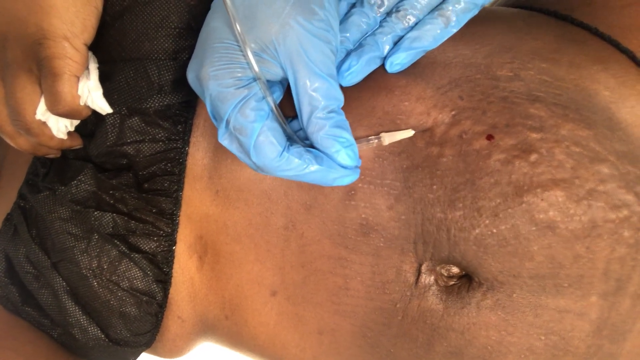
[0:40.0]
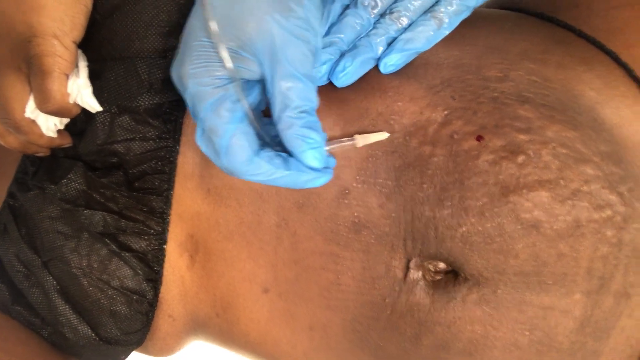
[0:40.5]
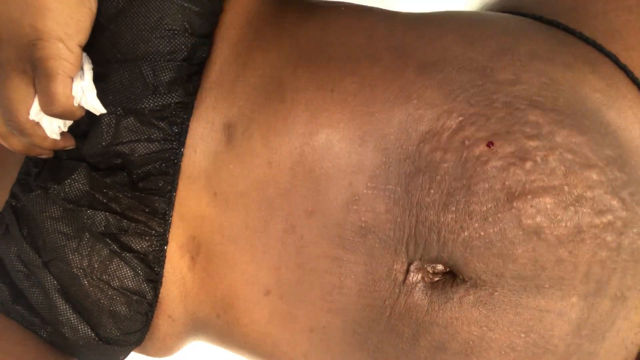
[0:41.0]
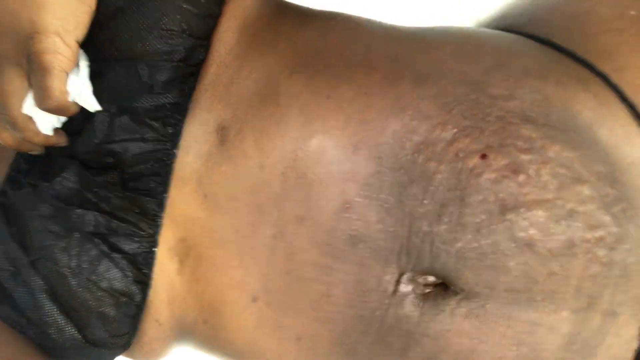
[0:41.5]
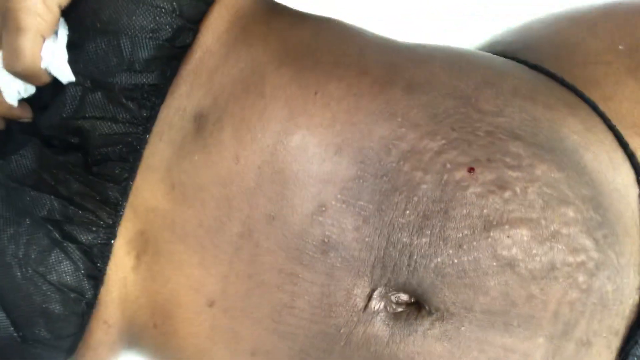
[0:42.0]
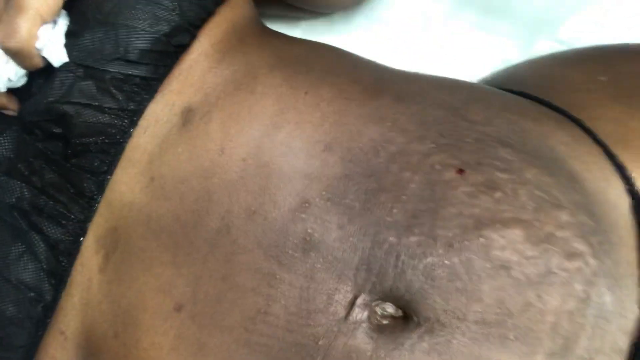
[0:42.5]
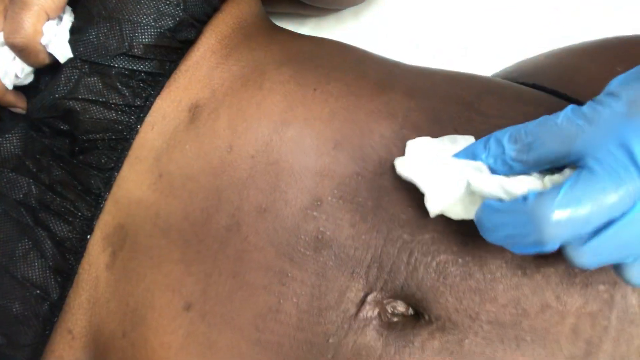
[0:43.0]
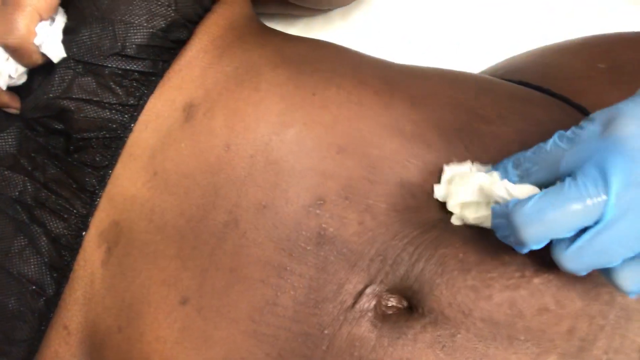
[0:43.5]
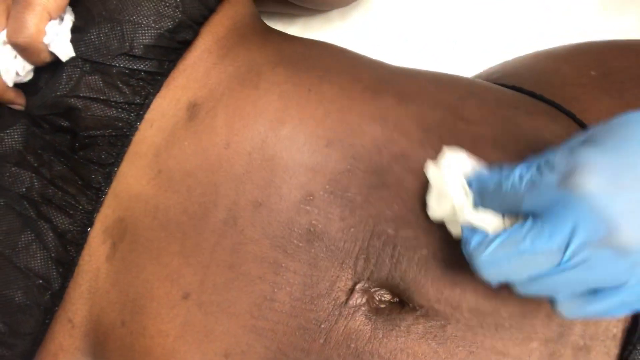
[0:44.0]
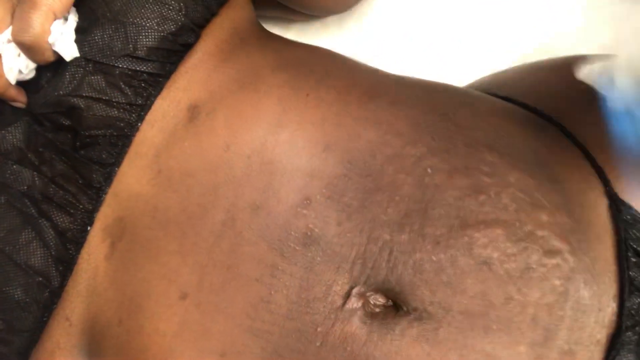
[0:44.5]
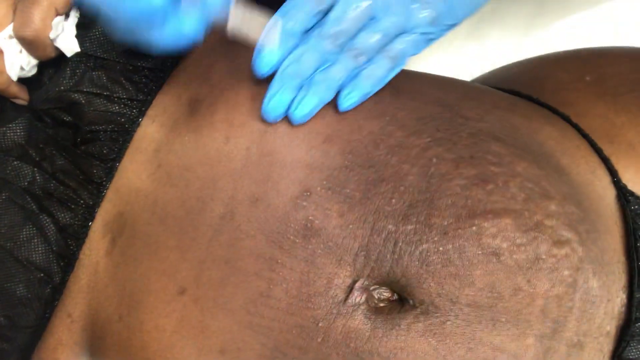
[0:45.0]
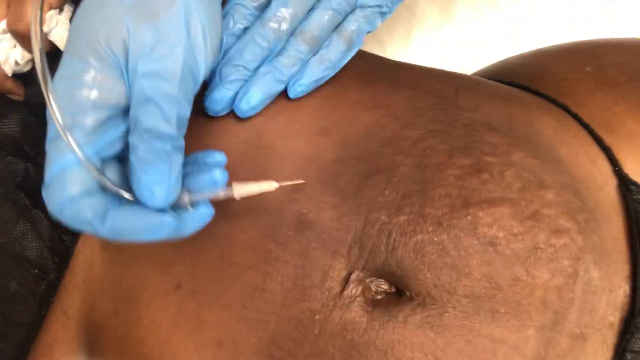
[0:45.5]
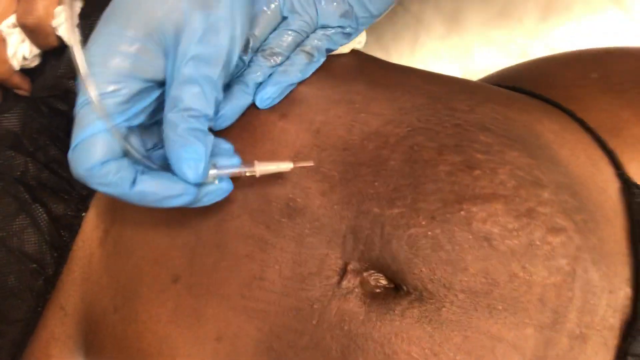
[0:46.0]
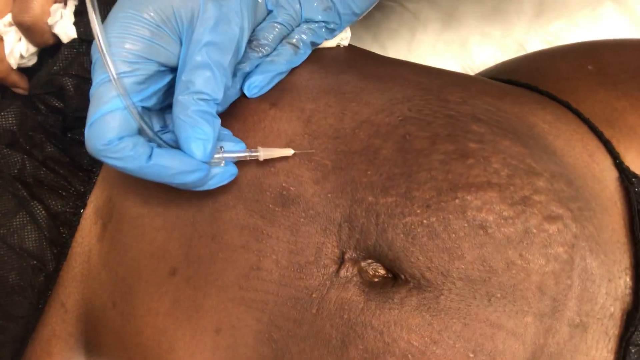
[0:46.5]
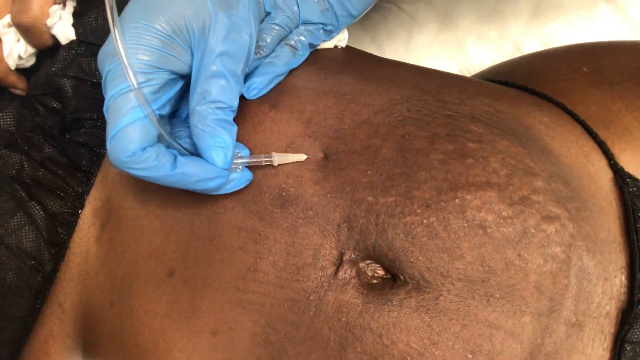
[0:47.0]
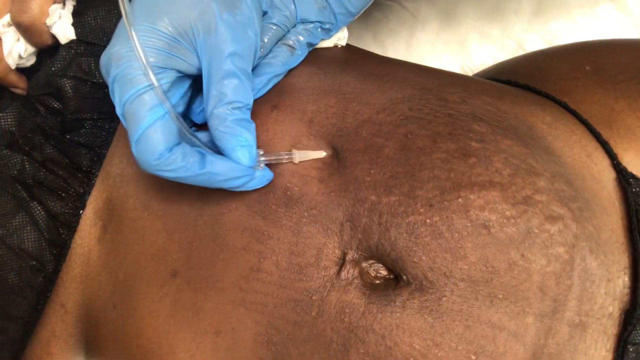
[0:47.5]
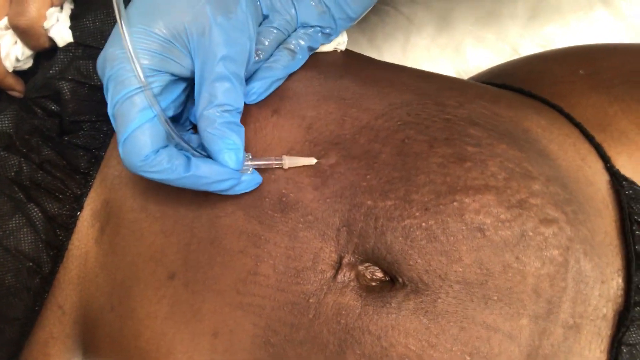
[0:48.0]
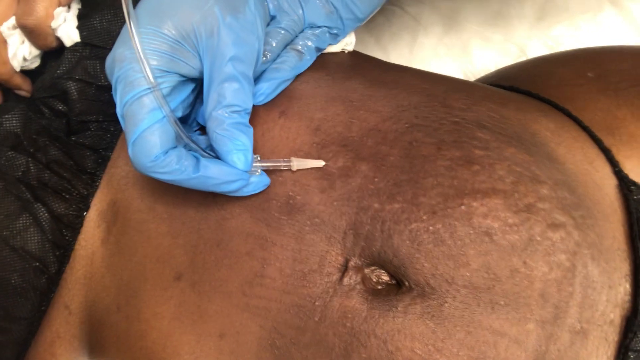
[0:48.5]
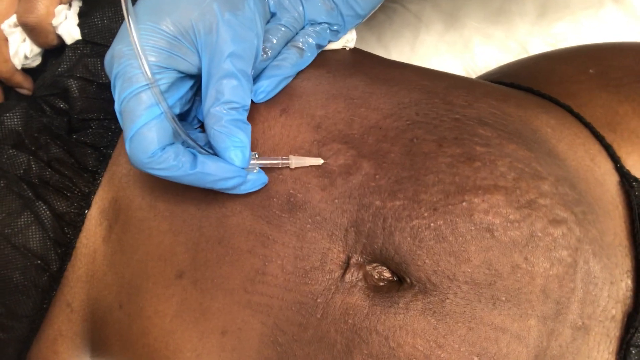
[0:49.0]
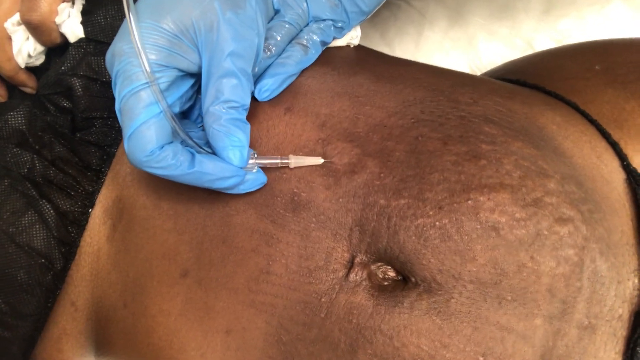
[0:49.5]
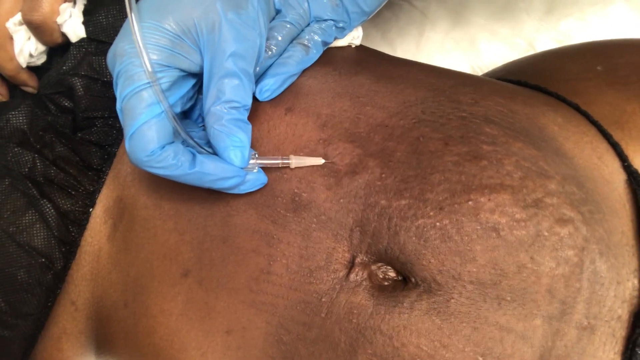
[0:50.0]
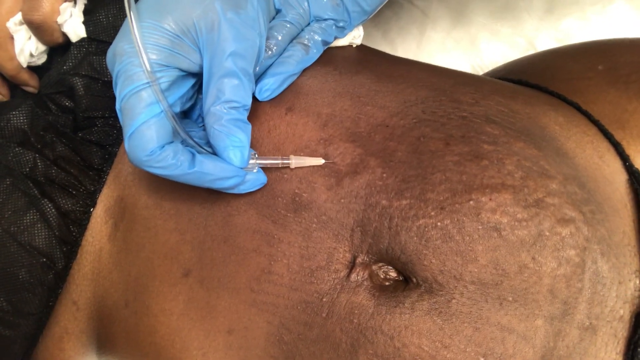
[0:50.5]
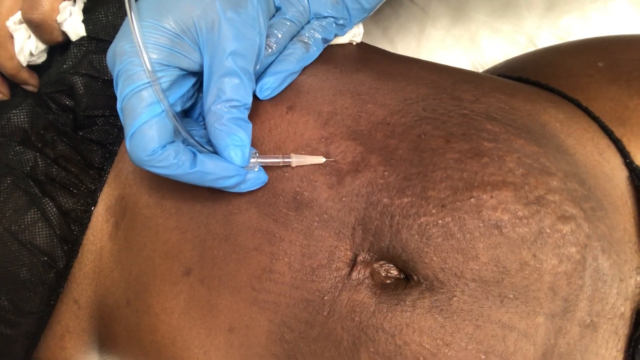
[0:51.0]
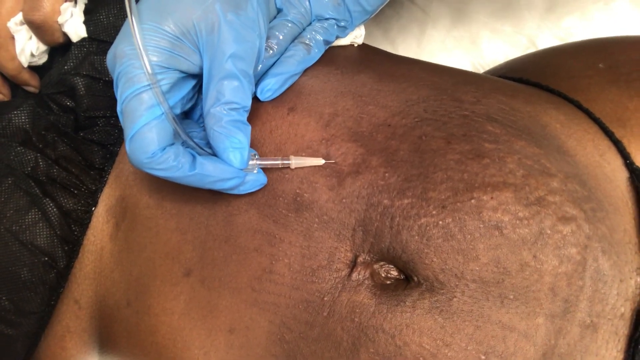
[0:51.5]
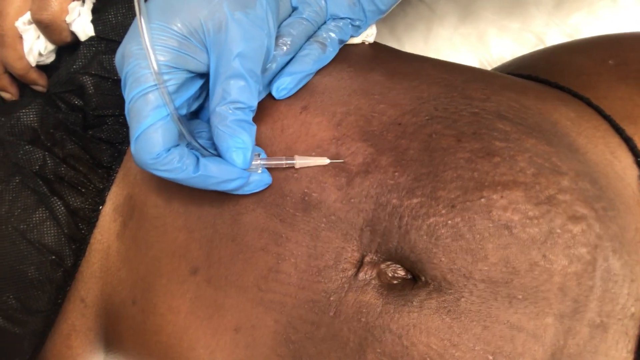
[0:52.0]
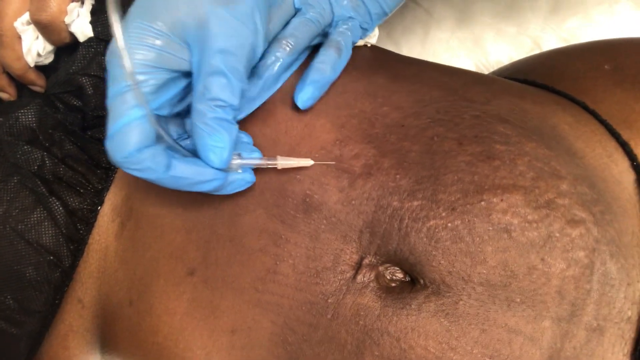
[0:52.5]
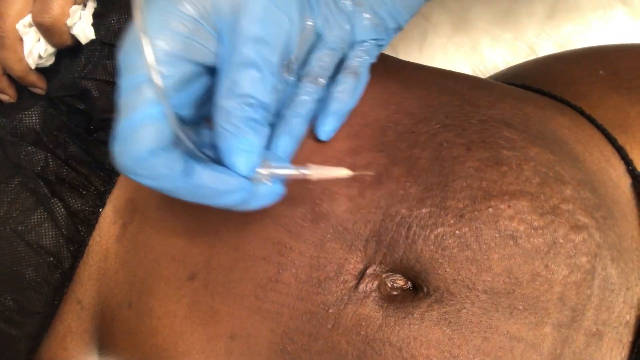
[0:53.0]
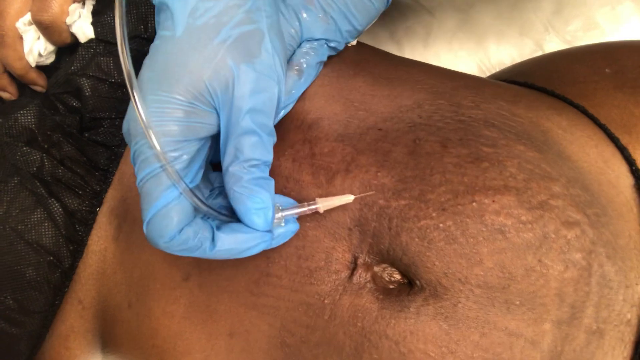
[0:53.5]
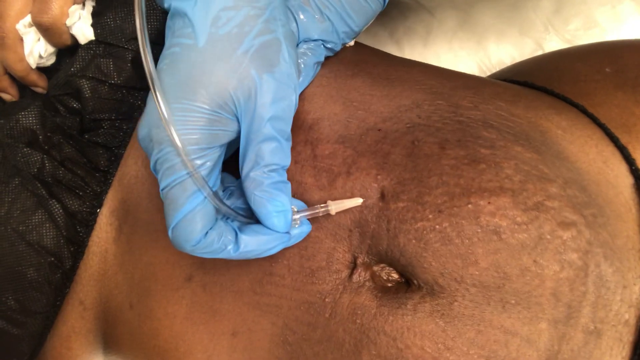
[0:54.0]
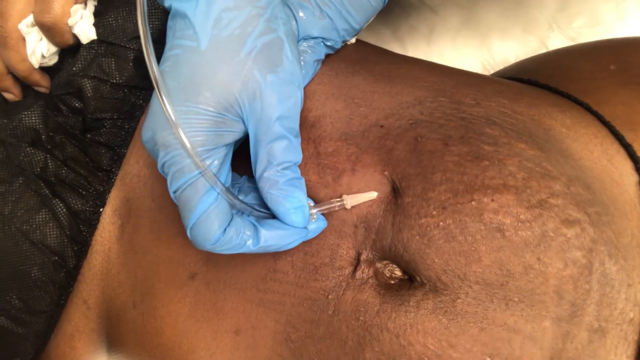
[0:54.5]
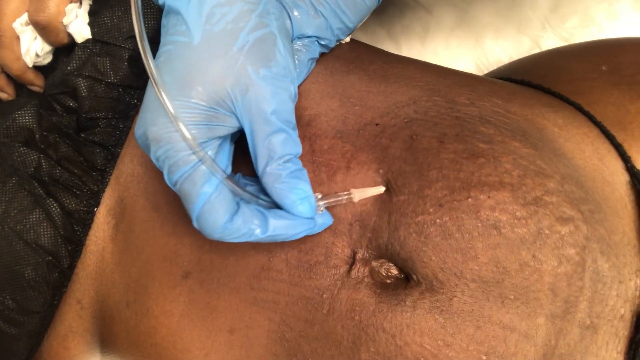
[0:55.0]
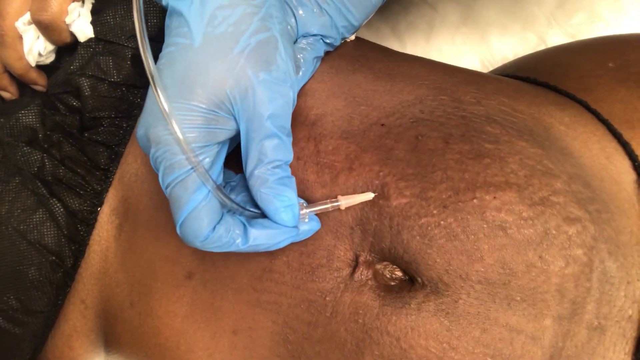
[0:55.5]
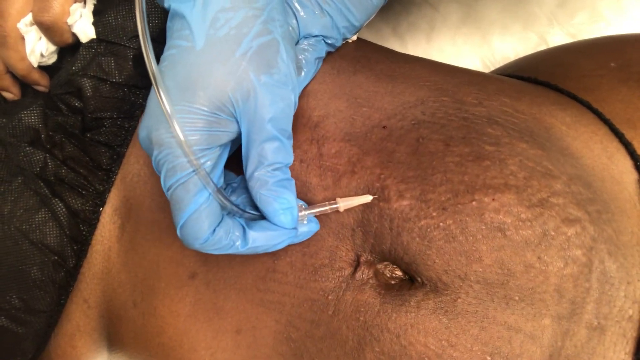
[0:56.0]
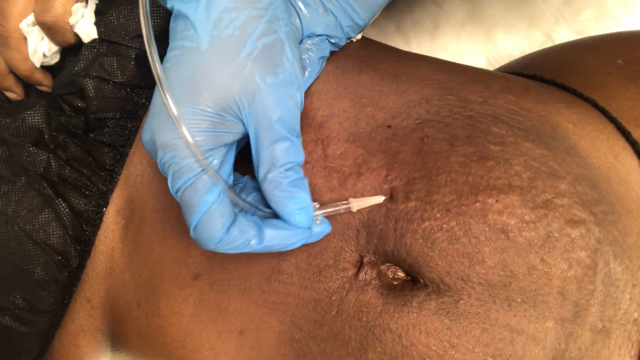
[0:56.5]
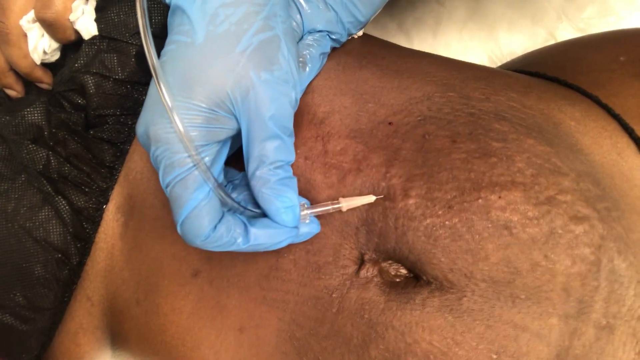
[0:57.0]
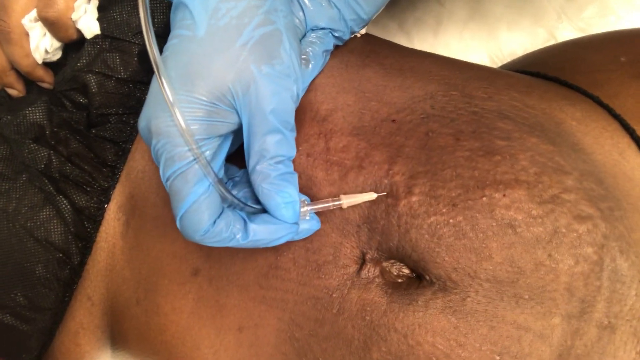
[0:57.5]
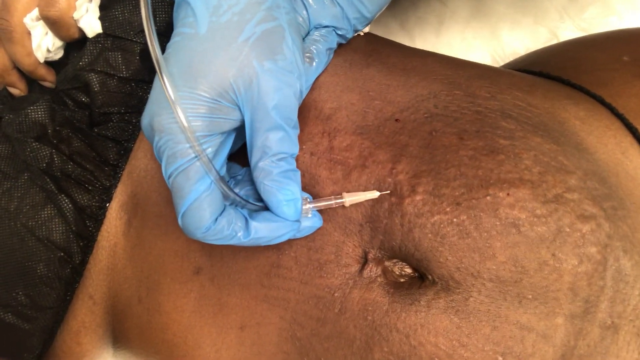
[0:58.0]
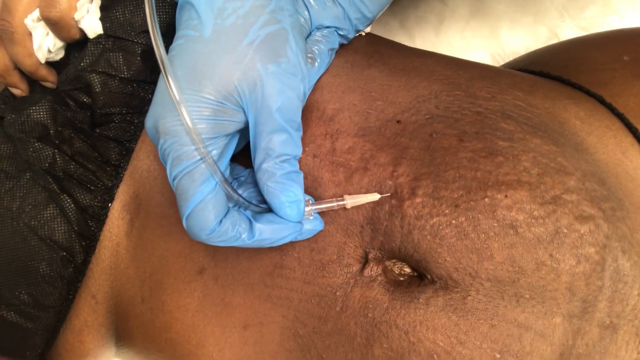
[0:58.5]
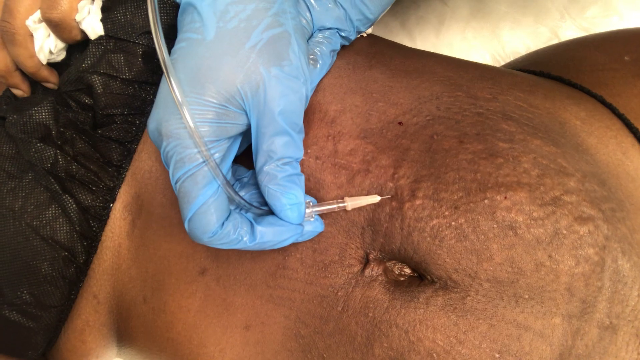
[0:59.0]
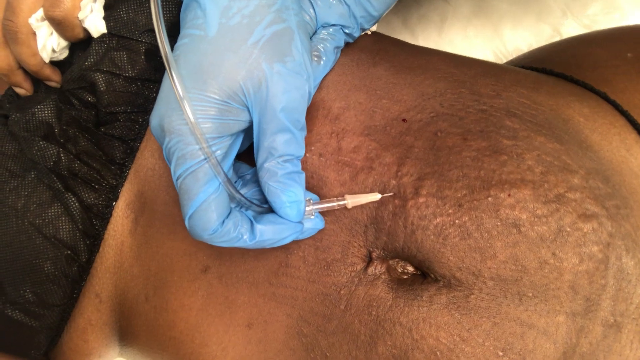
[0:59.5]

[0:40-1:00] The doctor, wearing blue latex gloves, holds down the patient's stomach with one hand and with the other holds a tube with a white tip and a needle attachment at the end, poking it into various places on the abdomen. The stomach is seen a little more close up, and the earlier needle points now show little spots of blood coming out of the skin. The belly button is fairly wrinkled, and there are signs of stretch marks on the skin around the belly button region. The camera shifts slightly as the doctor grabs a tissue and dabs up a small pool of blood, then sticks the needle into the skin slightly to the upper right of the belly button, and then directly to the right of the belly button.